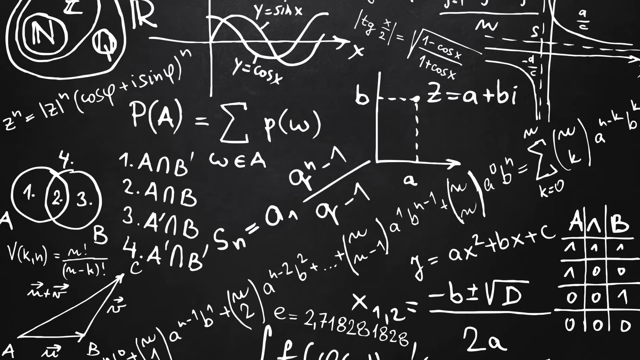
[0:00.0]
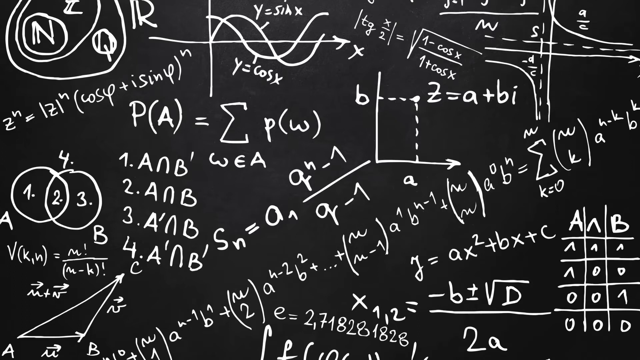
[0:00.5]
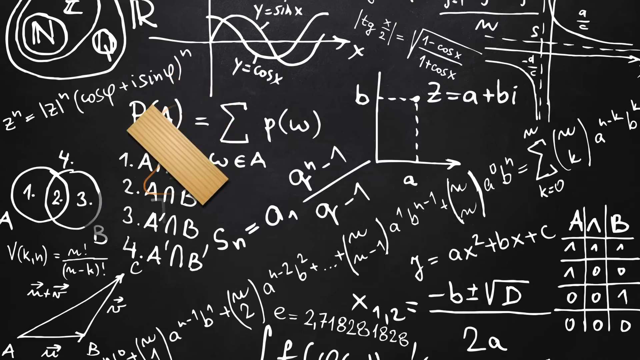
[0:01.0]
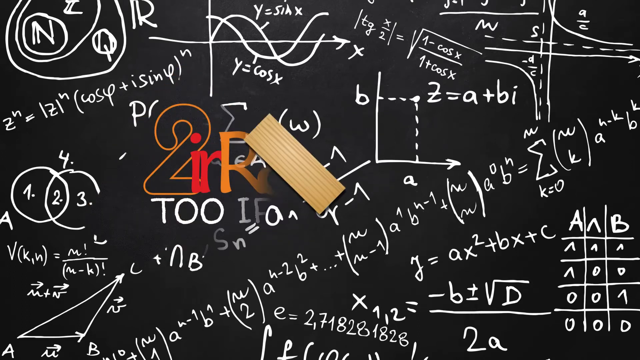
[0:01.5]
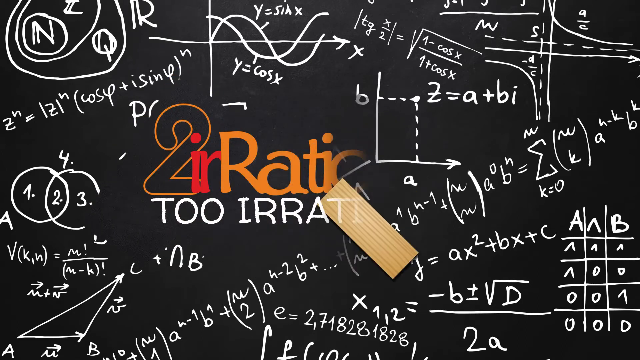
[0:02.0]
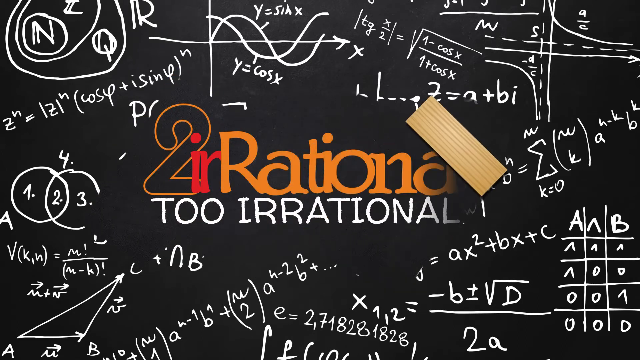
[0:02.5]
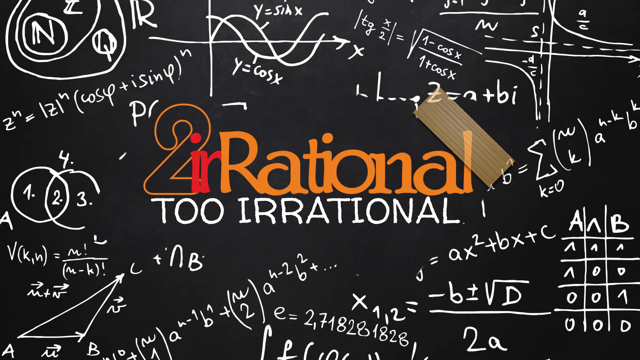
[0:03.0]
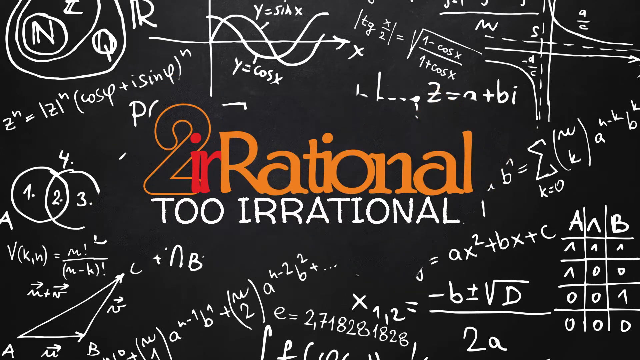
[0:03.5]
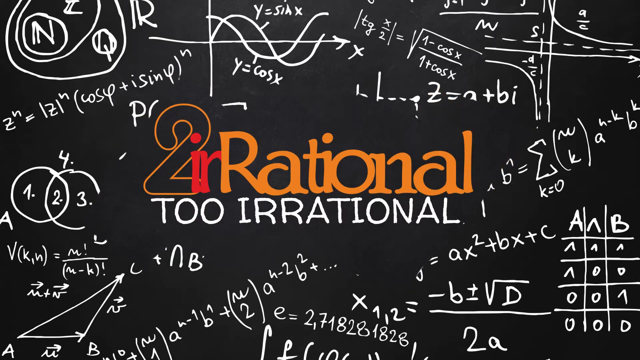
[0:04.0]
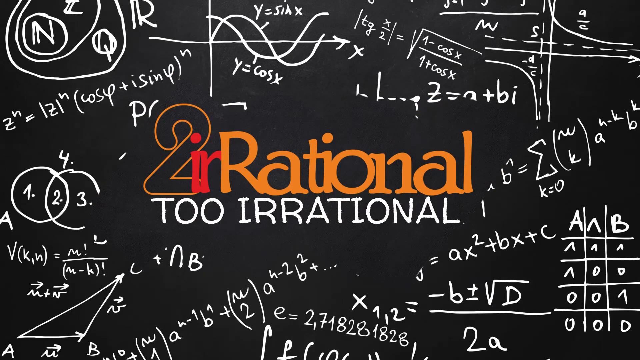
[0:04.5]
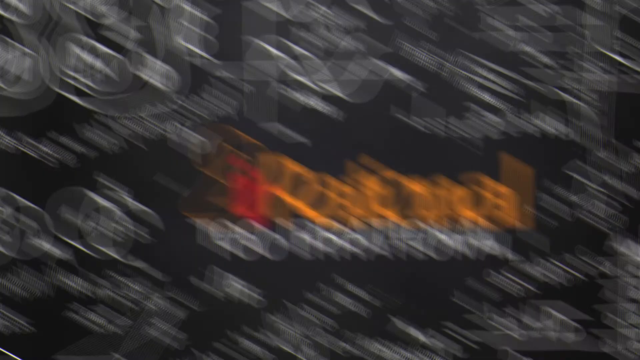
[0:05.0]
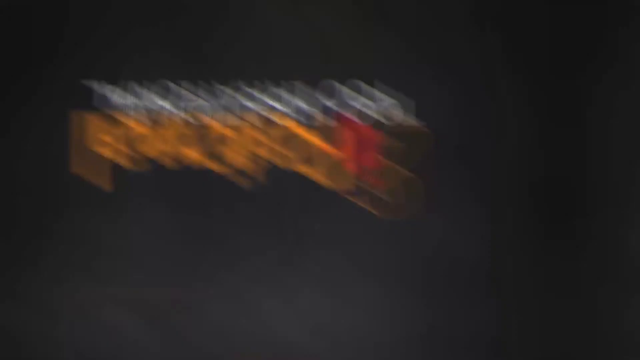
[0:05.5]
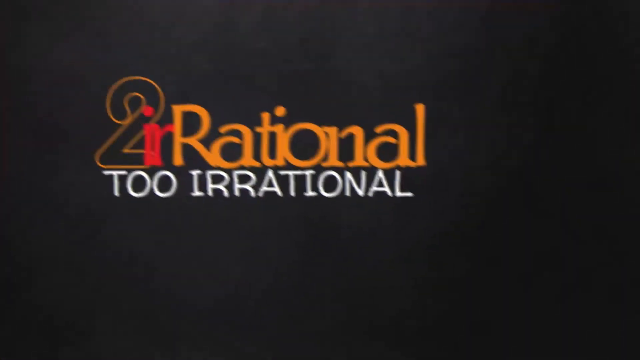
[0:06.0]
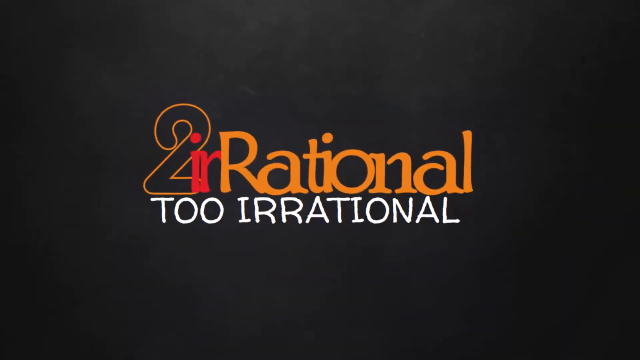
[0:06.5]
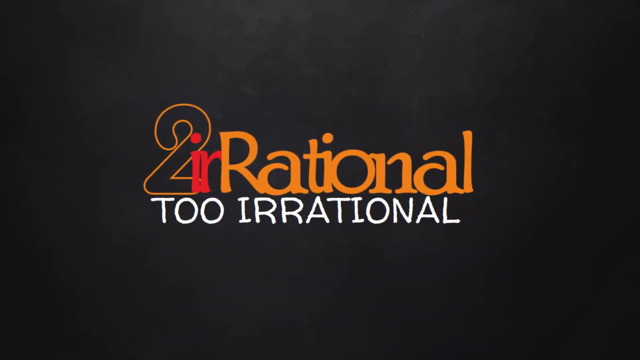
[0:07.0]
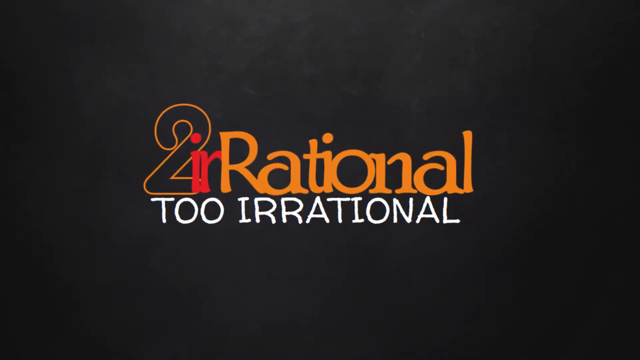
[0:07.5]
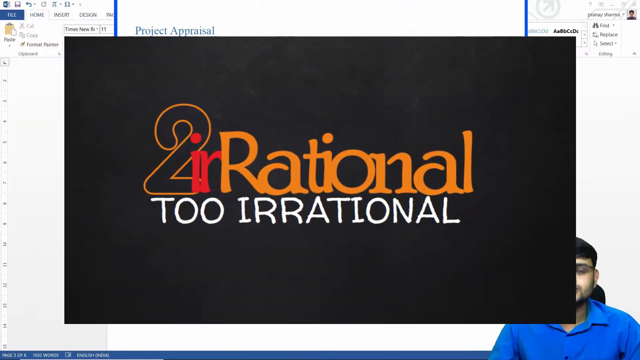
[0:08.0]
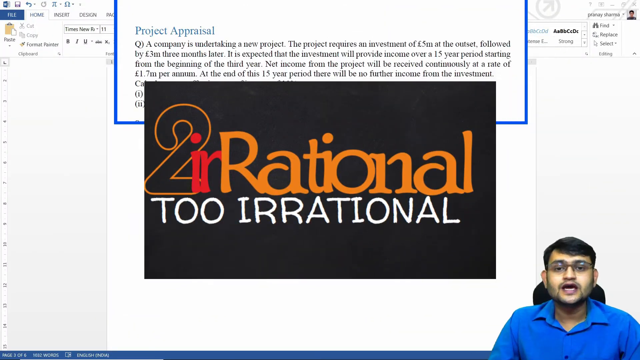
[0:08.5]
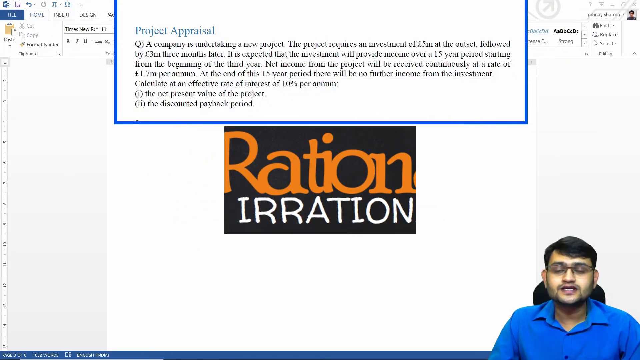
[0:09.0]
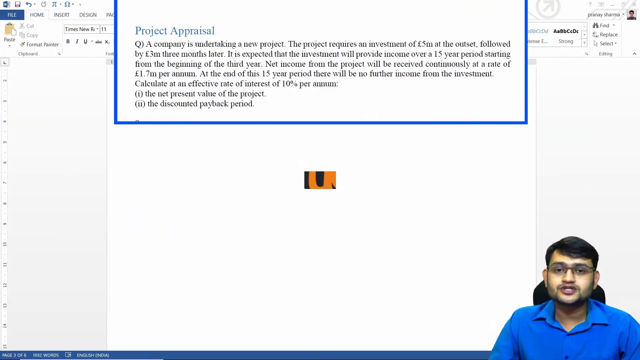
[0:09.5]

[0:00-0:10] A black chalkboard is completely filled with mathematical symbols, formulas and diagrams written in white: a Venn diagram, some functions on a graph, formulas for geometry, an array and many other kinds of mathematical concepts. A wooden eraser comes in and erases the middle of the board, revealing the channel's logo, which reads "2 irrational". The 2 is an empty bubble letter in orange; in "irrational" the lowercase i and r are red and the rest of the word is orange. Beneath it, "2 irrational" appears in white. The view pans to the upper left, onto a clean version of the logo with no formulas. That screen then shrinks rectangularly until it is completely gone, giving way to a blank page in a word processing program. In the upper middle, a blue rectangle surrounds the title "Project Appraisal" in blue and the text "Q: A company is undertaking a new project. The project requires an investment of five million pounds at the outset followed by three million pounds three months later. It's expected that the investment will provide income over a 15-year period starting from the beginning of the third year. Net income from the project will be received continuously at a rate of 1.7 million pounds per annum. At the end of this 15-year period there will be no further income from the investment. Calculate an effective rate of interest of 10% per annum. (i) net present value of the project, (ii) the discounted payback period." In the bottom right is an Indian man in a bright blue polo shirt, sitting in a computer chair whose headrest can be seen rising from behind his shoulders.